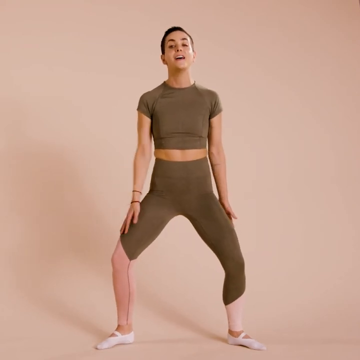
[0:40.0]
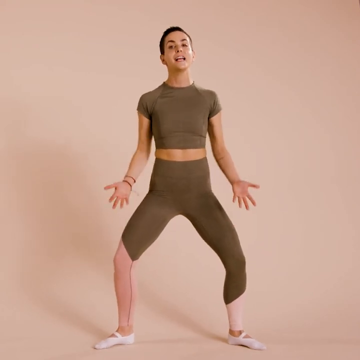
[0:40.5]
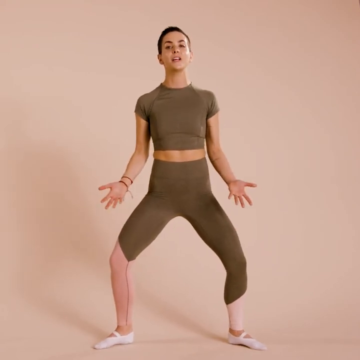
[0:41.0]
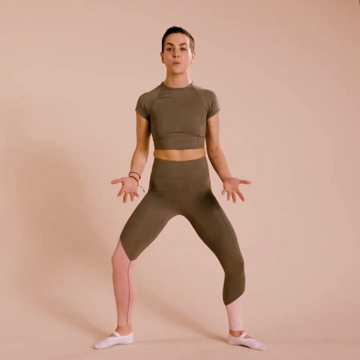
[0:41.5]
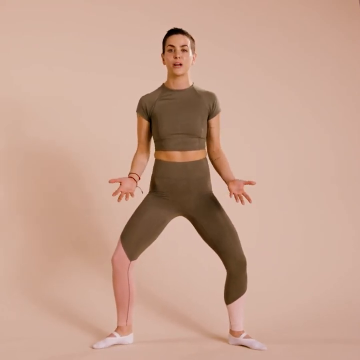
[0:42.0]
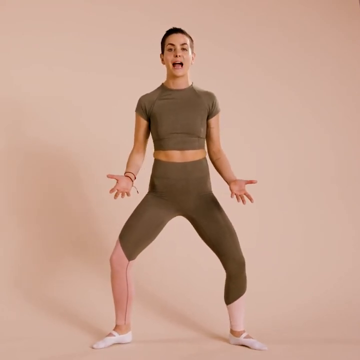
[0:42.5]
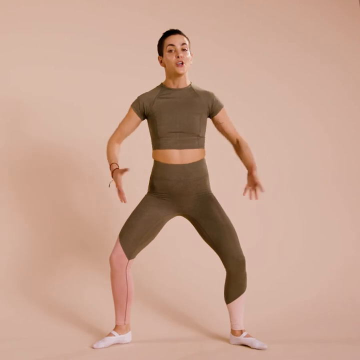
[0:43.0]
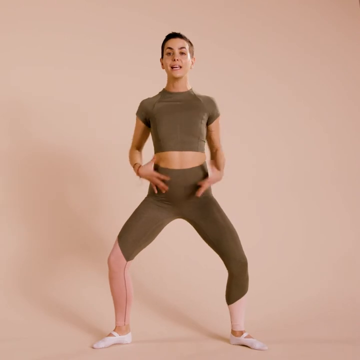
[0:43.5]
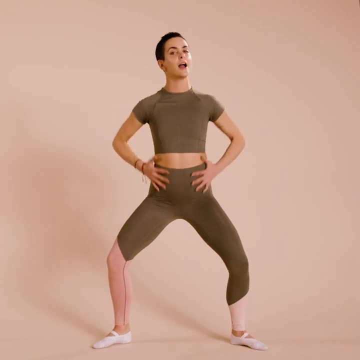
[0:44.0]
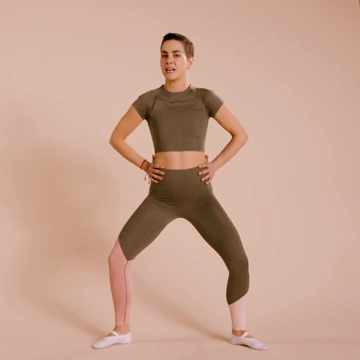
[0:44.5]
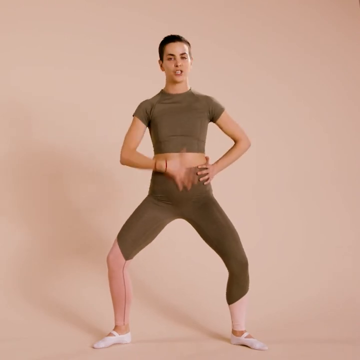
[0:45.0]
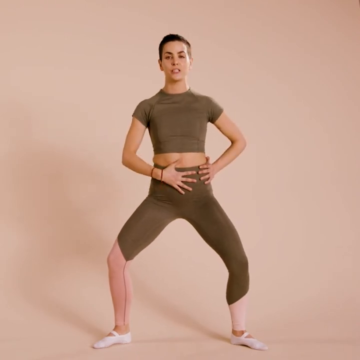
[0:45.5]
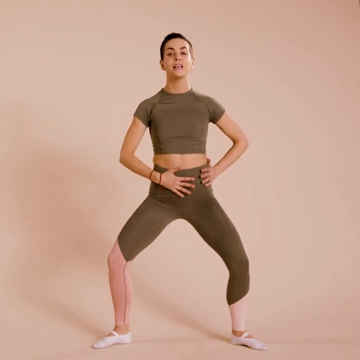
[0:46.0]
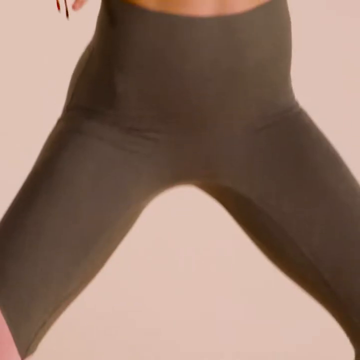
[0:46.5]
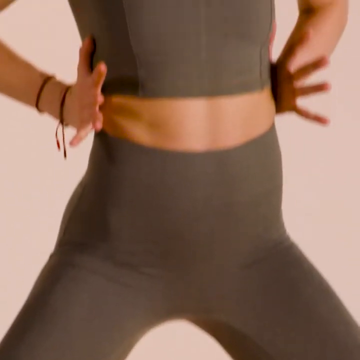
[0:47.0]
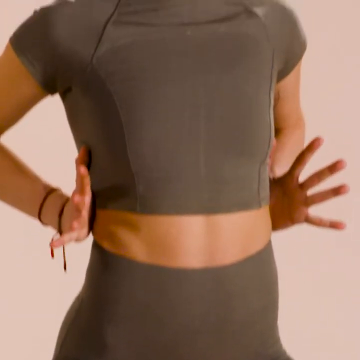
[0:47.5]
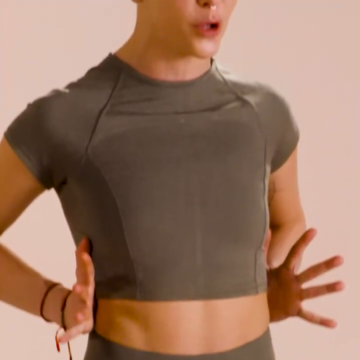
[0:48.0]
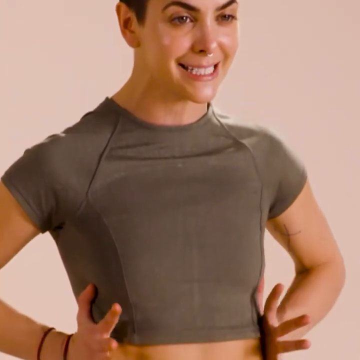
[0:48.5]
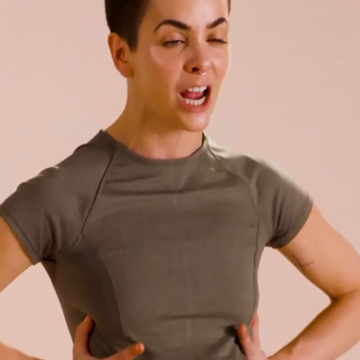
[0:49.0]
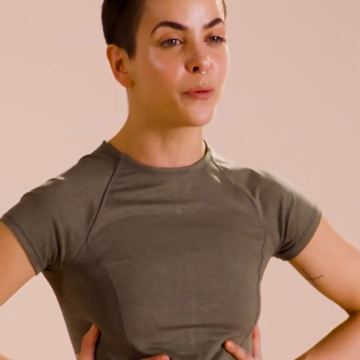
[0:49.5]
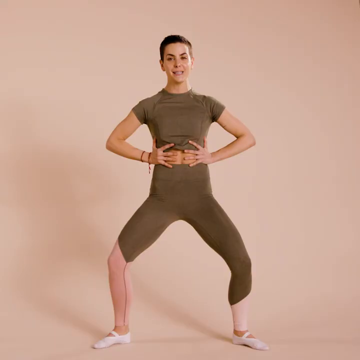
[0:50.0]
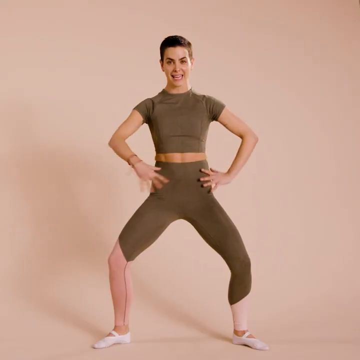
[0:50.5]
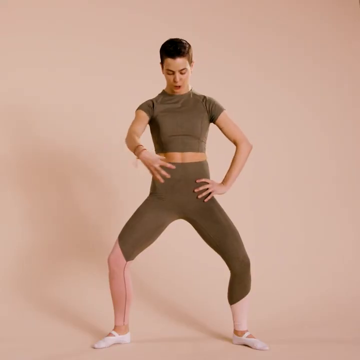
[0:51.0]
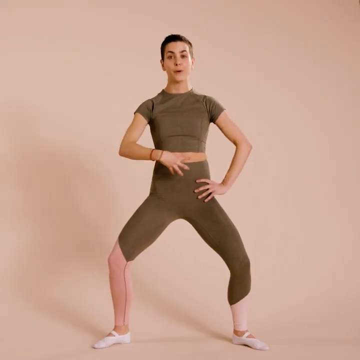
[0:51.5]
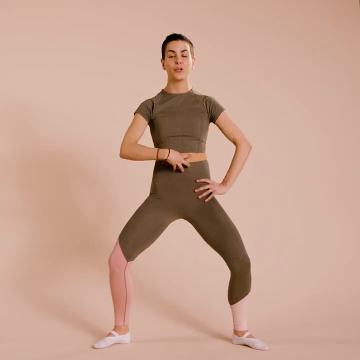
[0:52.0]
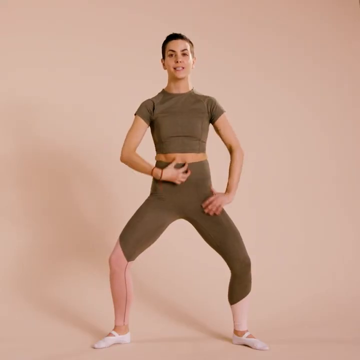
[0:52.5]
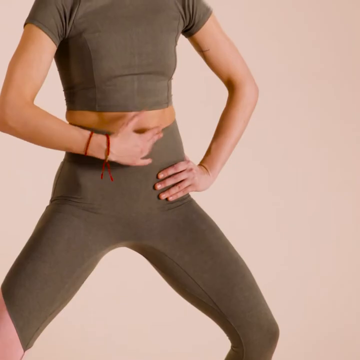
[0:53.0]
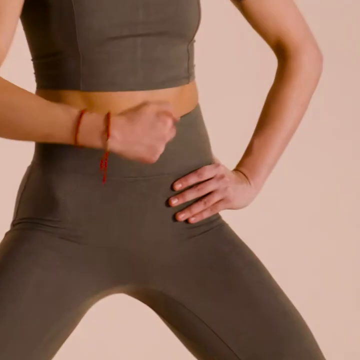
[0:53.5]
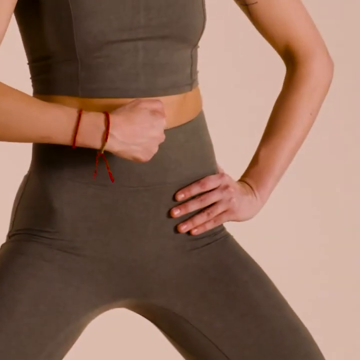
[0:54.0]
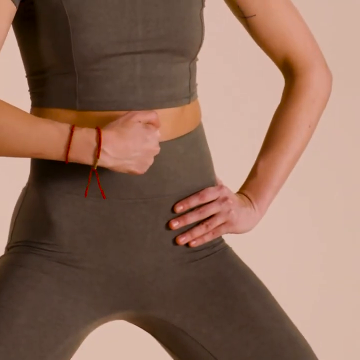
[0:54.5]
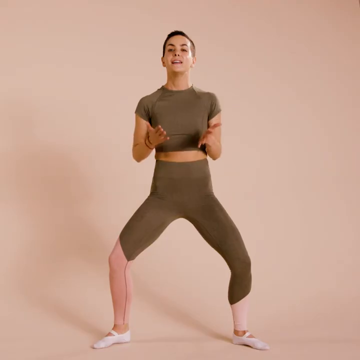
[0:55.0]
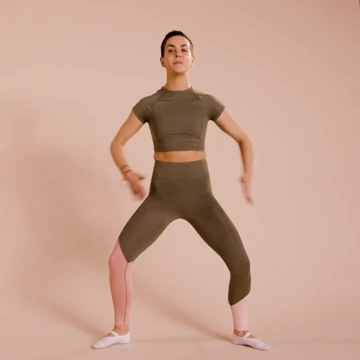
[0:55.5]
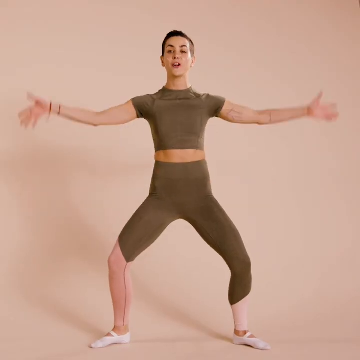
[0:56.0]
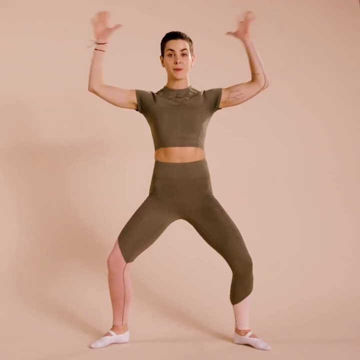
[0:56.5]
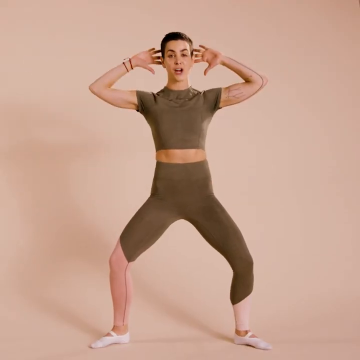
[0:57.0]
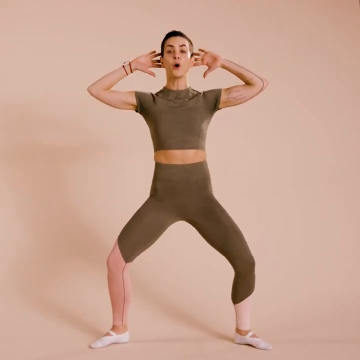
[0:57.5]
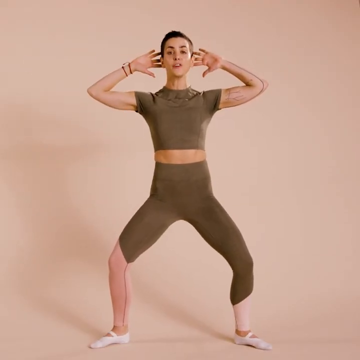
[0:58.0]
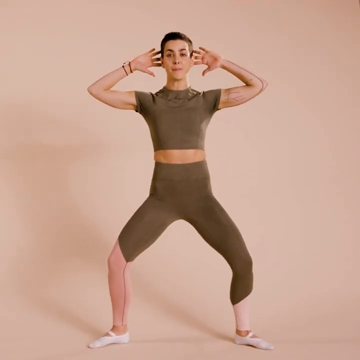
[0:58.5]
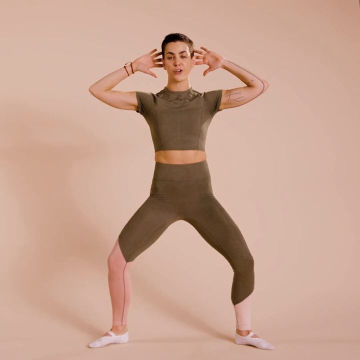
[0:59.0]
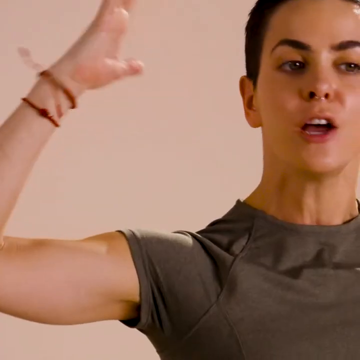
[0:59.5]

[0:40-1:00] She continues to slightly squat in the wide stance, using her hands as she talks, referring to her core, slightly shuffling her shoulders, and swiping her right hand over her belly. She grabs her waist by putting the palms of her hands on the sides of her ribcage and slowly moves her palms inward onto her front, emphasizing bracing the core. She then puts her left hand on her left hip and gestures with her right hand onto her core in a claw hand gesture, knocking on it. Eventually she brings both arms up to shoulder height and puts her hands behind her head so that her elbows are in line with her shoulders, then touches her shoulders after placing her hands on her head.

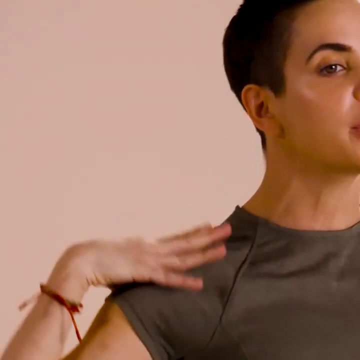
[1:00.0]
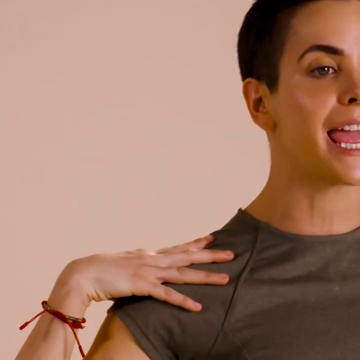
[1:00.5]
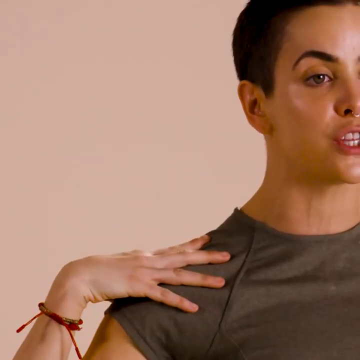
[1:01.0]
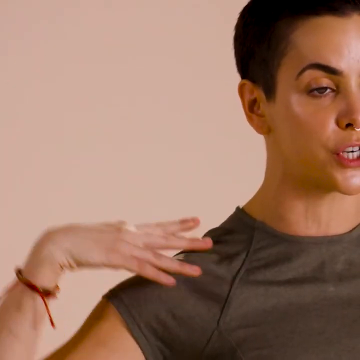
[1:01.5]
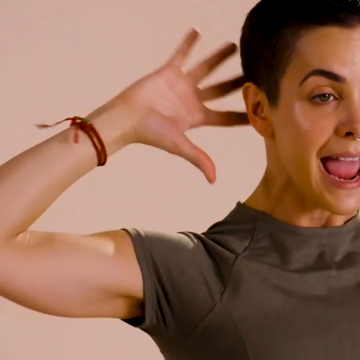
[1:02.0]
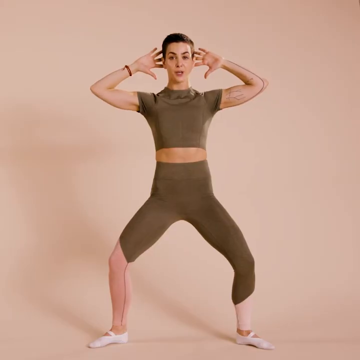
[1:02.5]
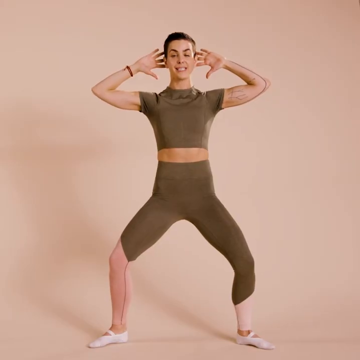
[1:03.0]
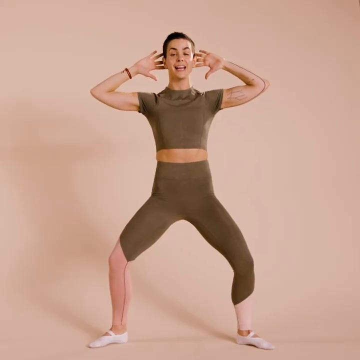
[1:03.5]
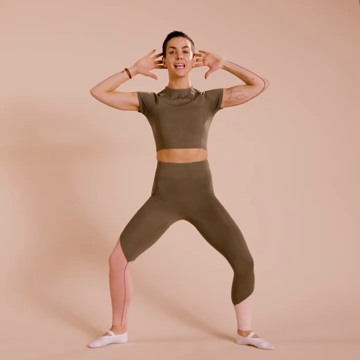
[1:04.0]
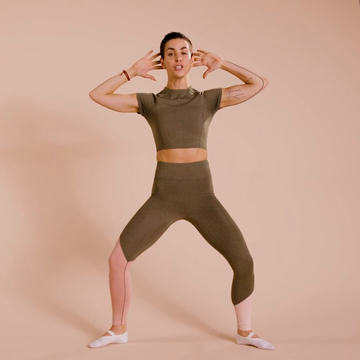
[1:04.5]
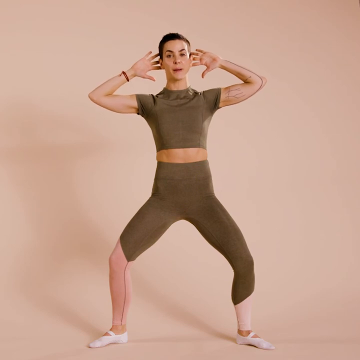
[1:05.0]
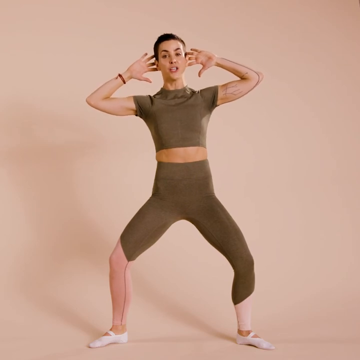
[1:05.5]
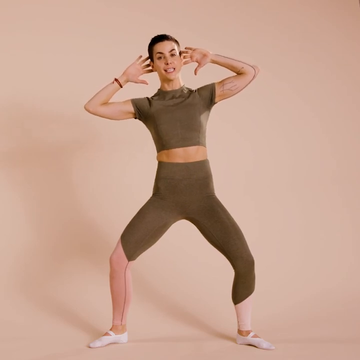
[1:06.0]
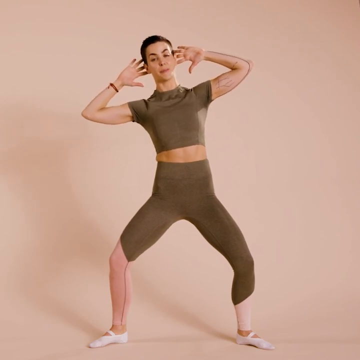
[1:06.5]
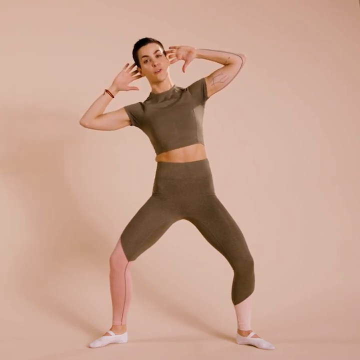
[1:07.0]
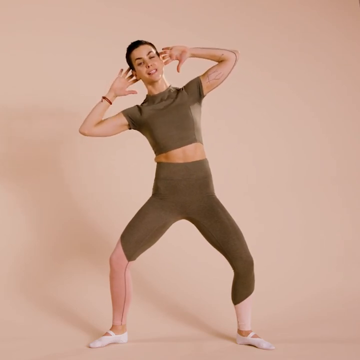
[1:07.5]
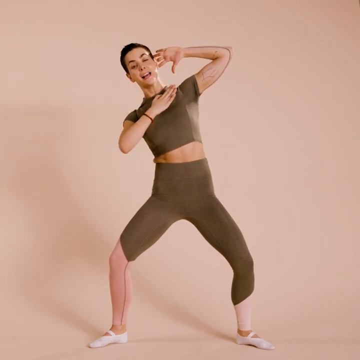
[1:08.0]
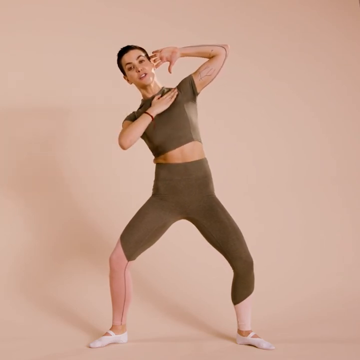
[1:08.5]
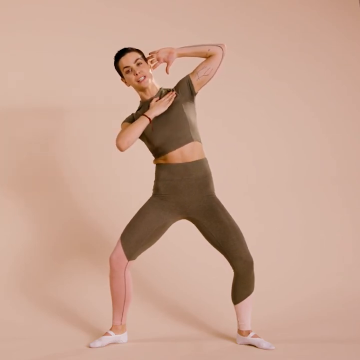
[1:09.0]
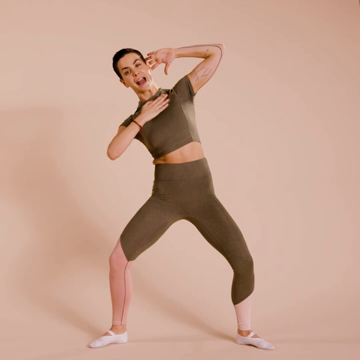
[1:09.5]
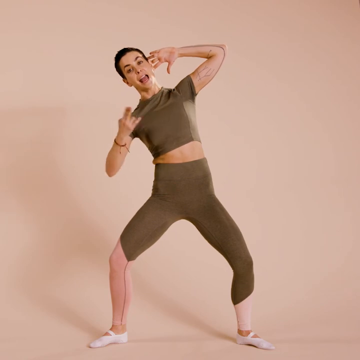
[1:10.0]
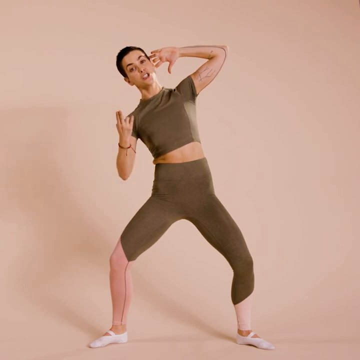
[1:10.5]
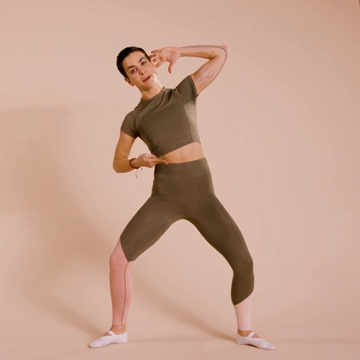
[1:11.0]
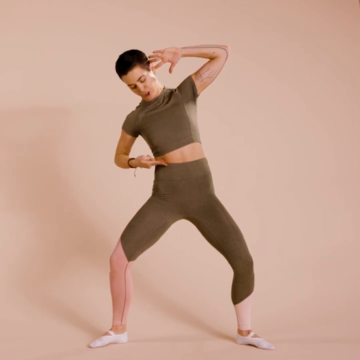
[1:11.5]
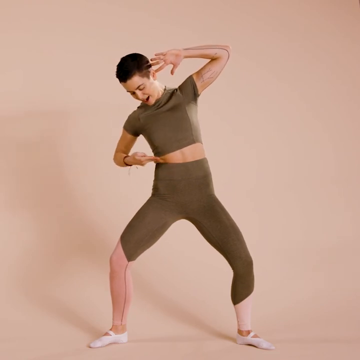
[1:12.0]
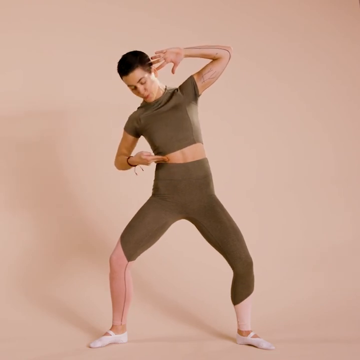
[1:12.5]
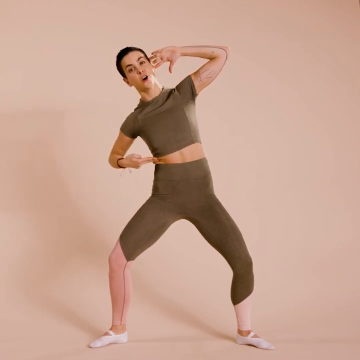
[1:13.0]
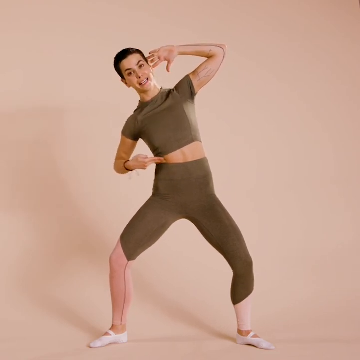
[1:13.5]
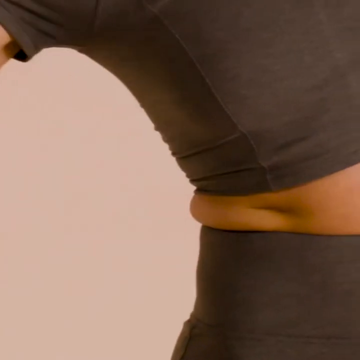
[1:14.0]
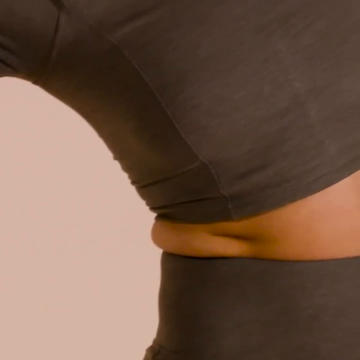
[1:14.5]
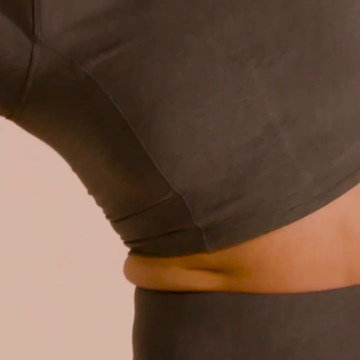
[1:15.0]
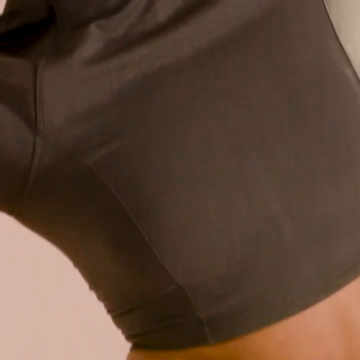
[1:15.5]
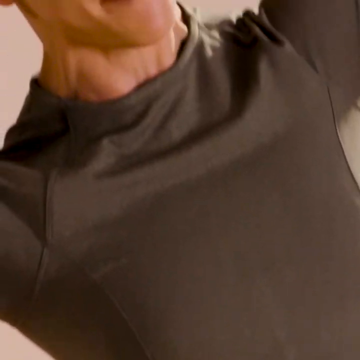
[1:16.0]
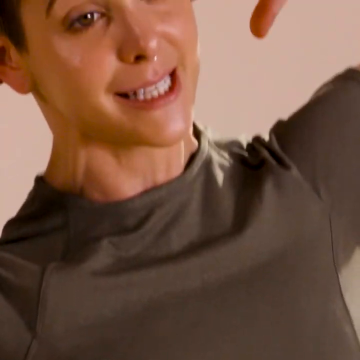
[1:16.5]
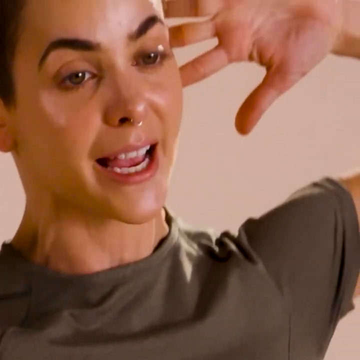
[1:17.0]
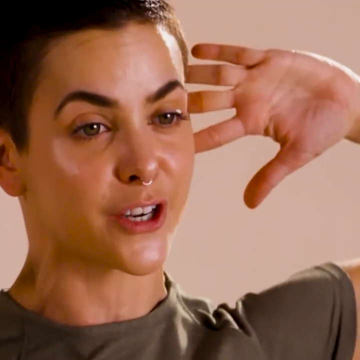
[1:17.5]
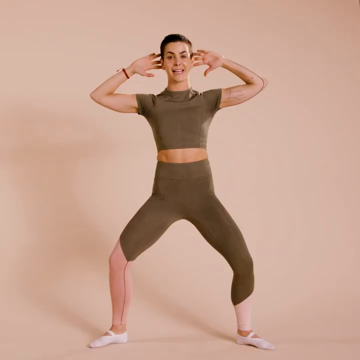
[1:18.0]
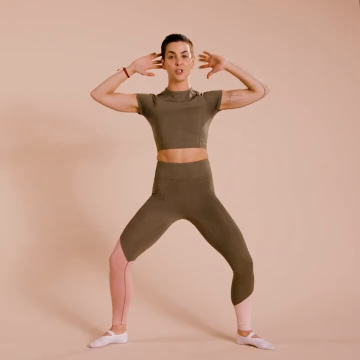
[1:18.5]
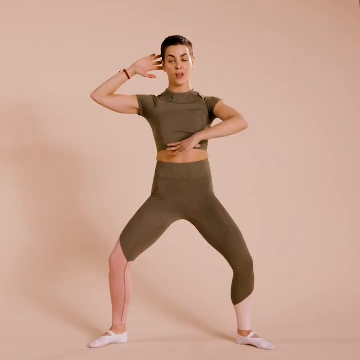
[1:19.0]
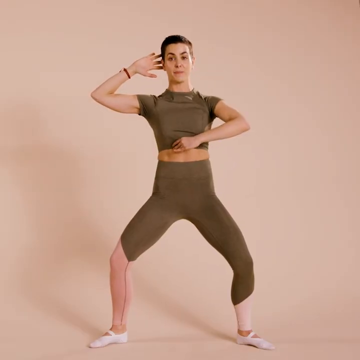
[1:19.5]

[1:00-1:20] As she places her hands on her shoulders, the camera focuses mostly on her right shoulder, which she holds. Her arms then go back up to touch the back of her head with her palms facing the camera. Still speaking to the camera, holding the wide stance with her hands behind her head and palms facing the camera, she braces her core and tilts to the right, keeping her body mostly aligned as her right shoulder tips over her right knee. She motions with her right hand toward her core to emphasize the part to be braced. From this angle, tattoos are visible on her left hand, and a close-up of her face after she gestures toward her core shows a golden nose ring. She slowly tips her right shoulder toward her right knee but does not go too far as she continues explaining to the camera.